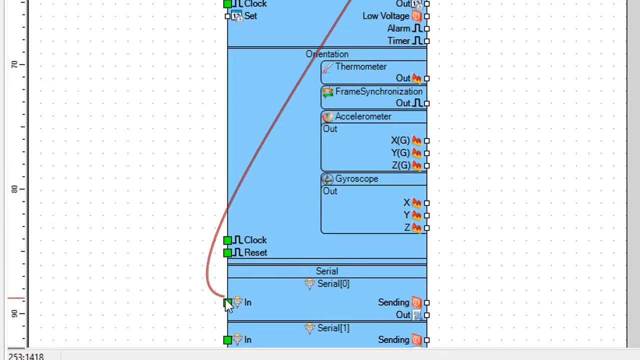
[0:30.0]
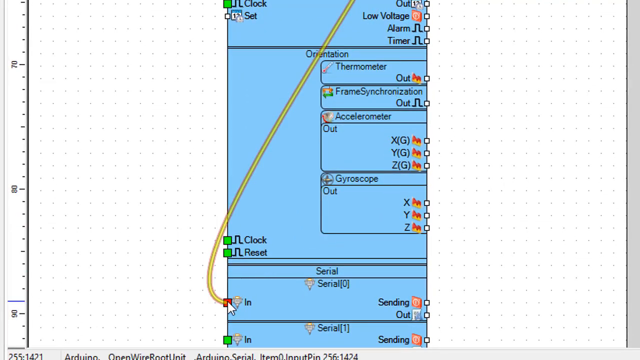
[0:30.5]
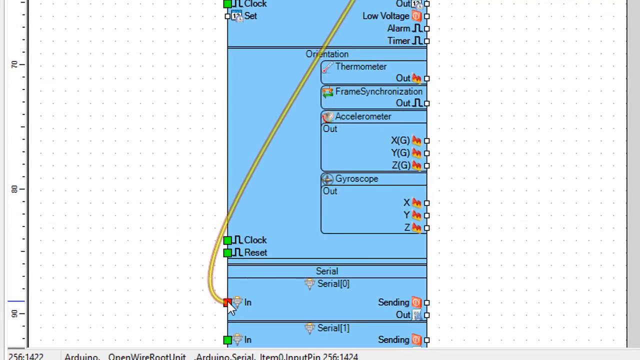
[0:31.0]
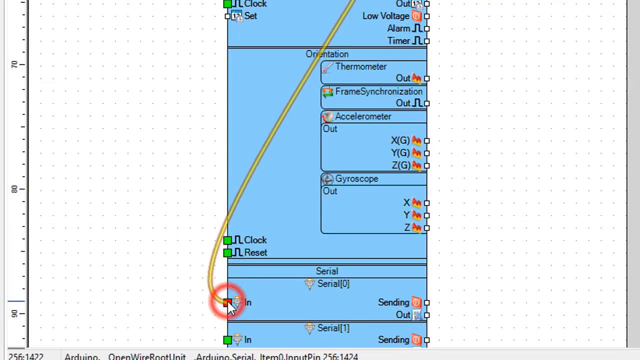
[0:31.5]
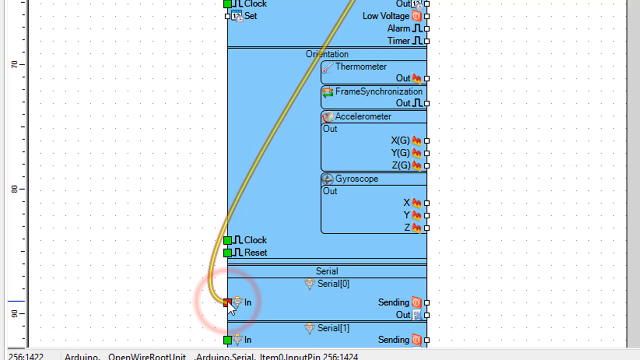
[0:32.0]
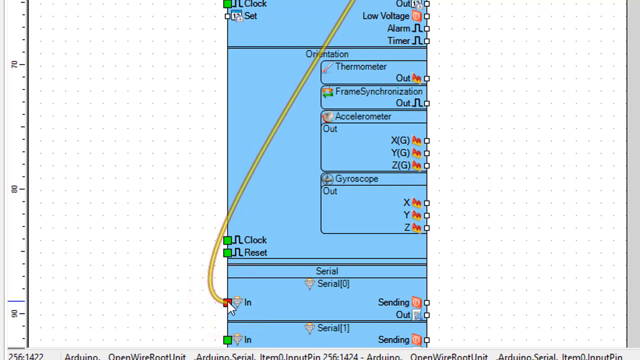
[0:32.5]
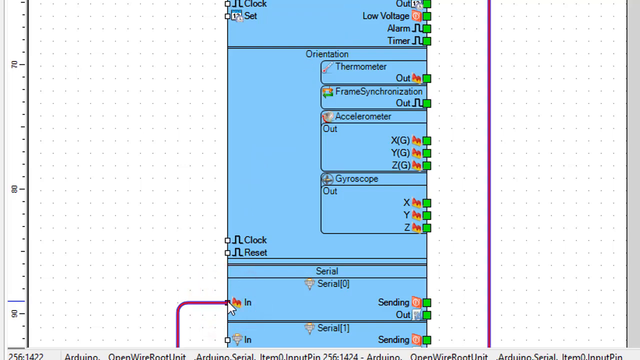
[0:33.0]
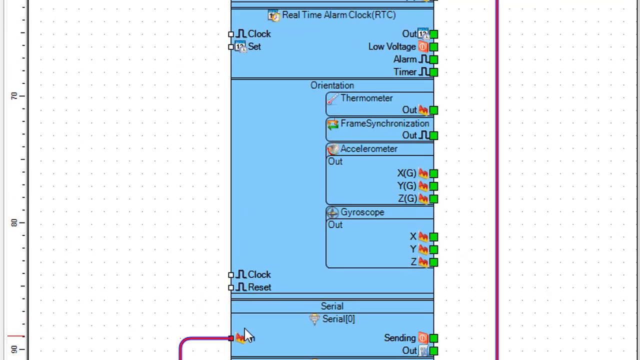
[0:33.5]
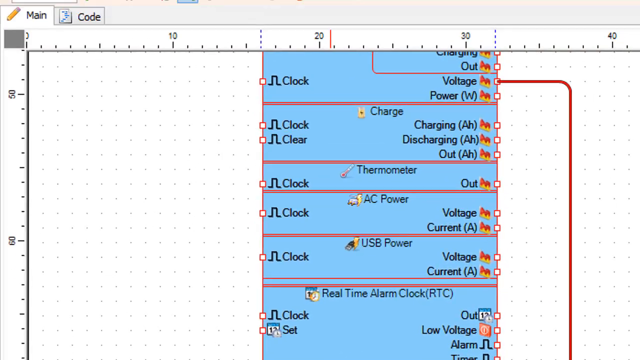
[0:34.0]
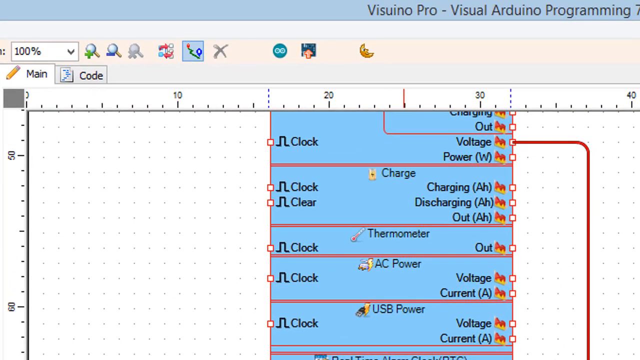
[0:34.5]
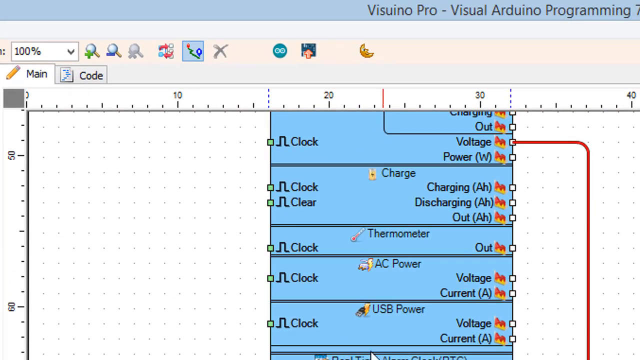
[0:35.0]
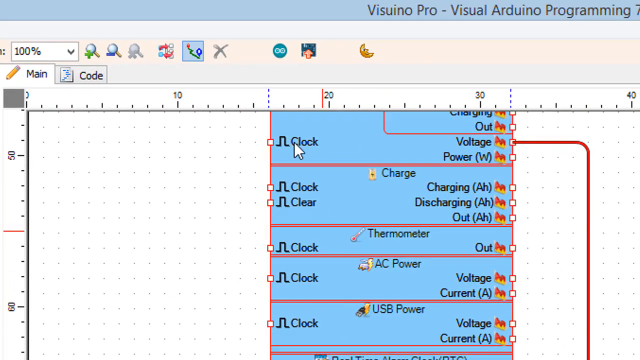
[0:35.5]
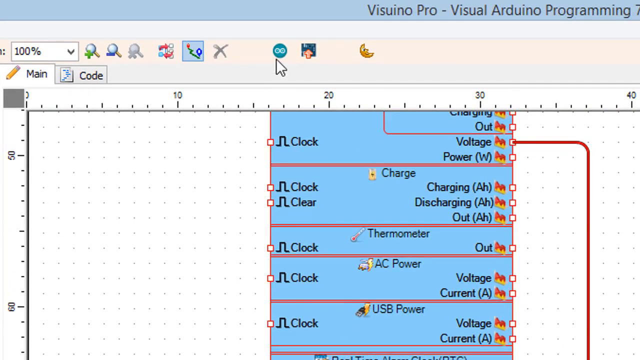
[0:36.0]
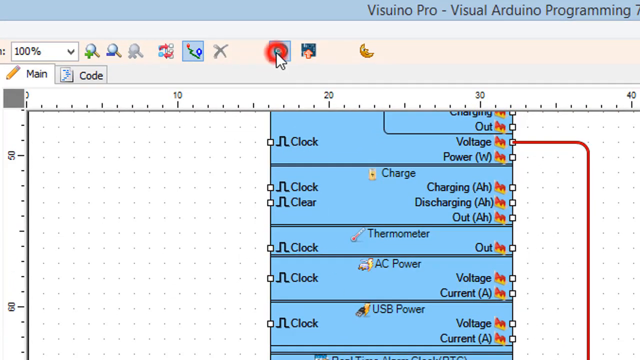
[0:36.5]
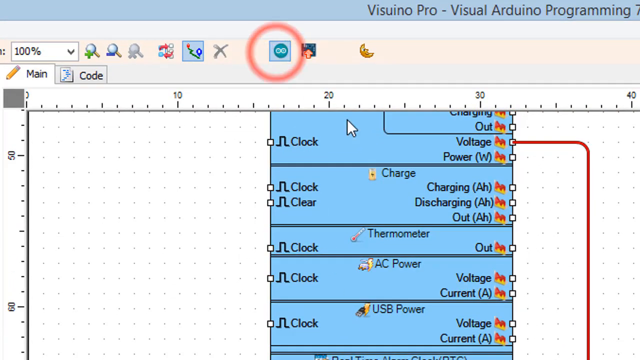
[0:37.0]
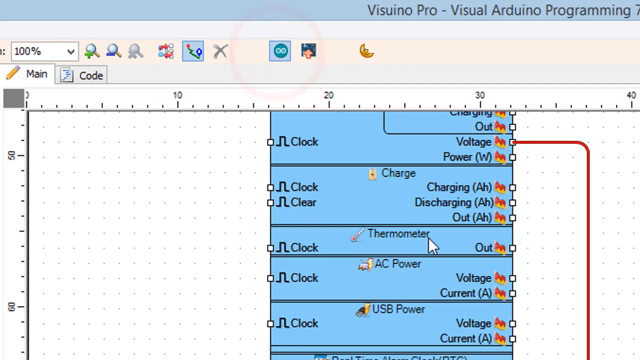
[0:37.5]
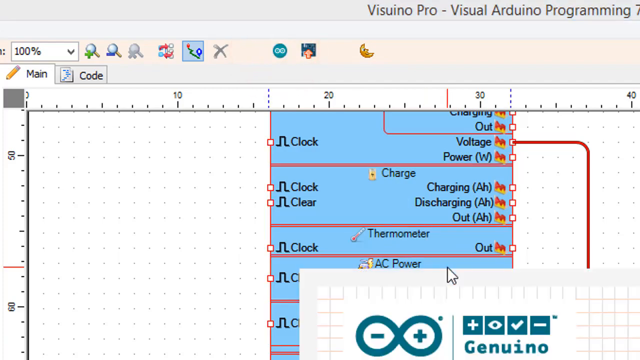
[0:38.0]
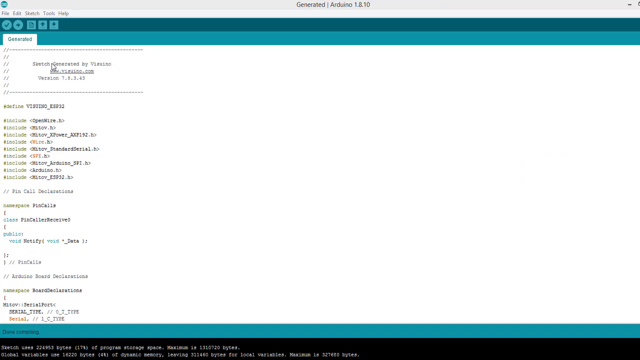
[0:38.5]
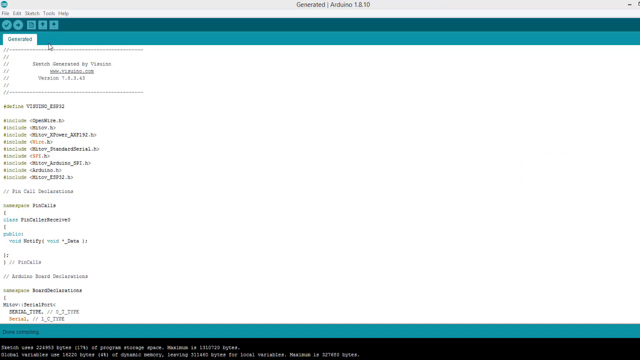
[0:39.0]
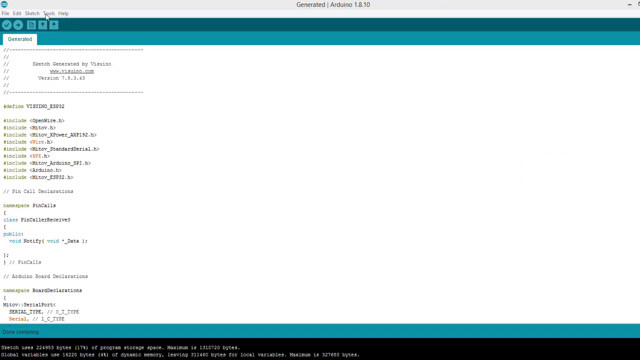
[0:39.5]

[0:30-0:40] The "in" box is clicked and turns from green to red, and the boxes on the right side turn from white to the green the left-side boxes had been. The user scrolls up to a ruler-like bar at the top, similar to one in a word document, moves it to around 25, between 20 and 30, and then back; this seems to happen just from hovering. They click an infinity sign icon at the very top, move the mouse down, click on the blue box, a pop-up appears, and they click on the top menu. The program seems to be called Suino Pro Visual Arduino Programming, though its purpose is hard to understand.